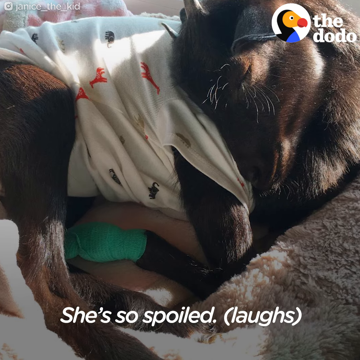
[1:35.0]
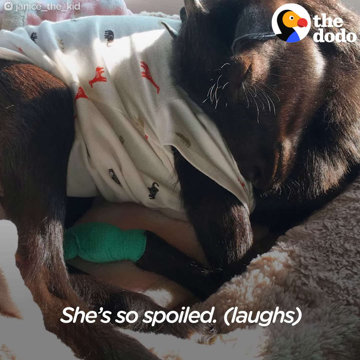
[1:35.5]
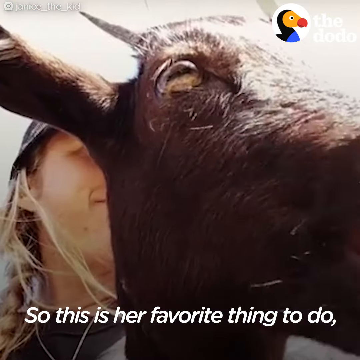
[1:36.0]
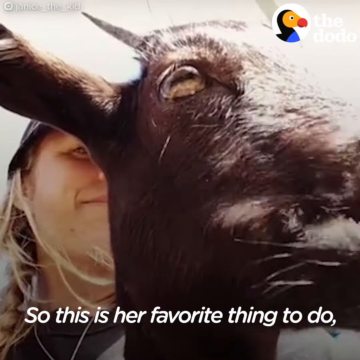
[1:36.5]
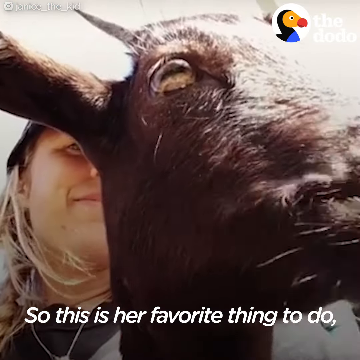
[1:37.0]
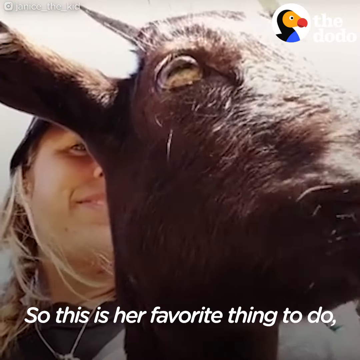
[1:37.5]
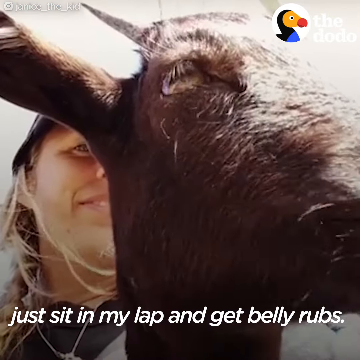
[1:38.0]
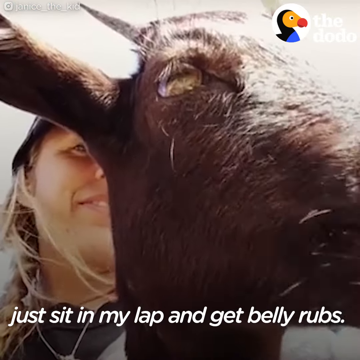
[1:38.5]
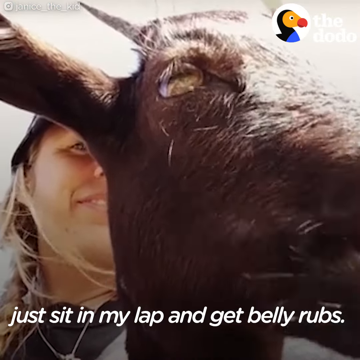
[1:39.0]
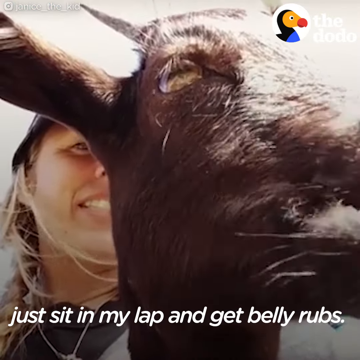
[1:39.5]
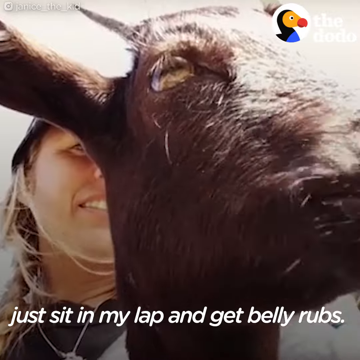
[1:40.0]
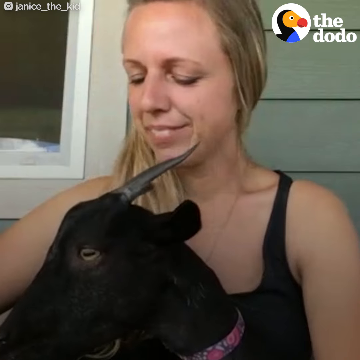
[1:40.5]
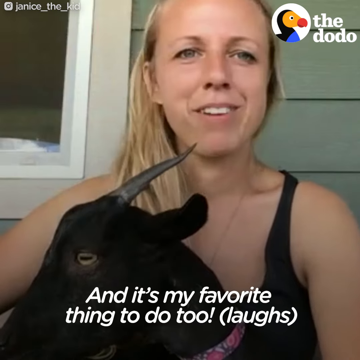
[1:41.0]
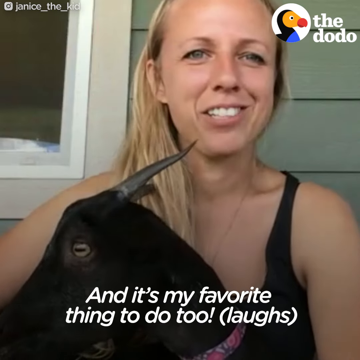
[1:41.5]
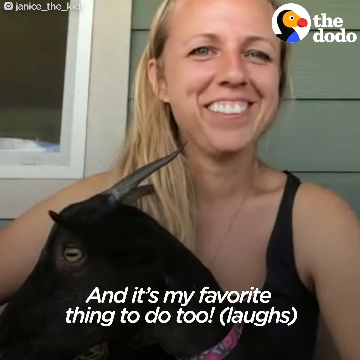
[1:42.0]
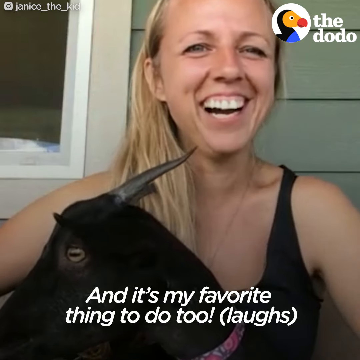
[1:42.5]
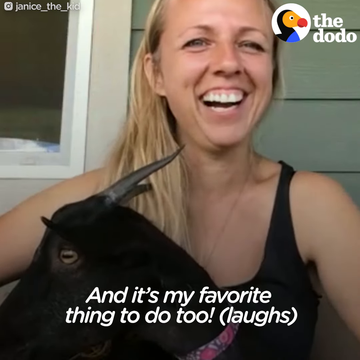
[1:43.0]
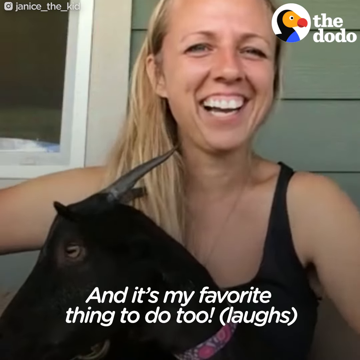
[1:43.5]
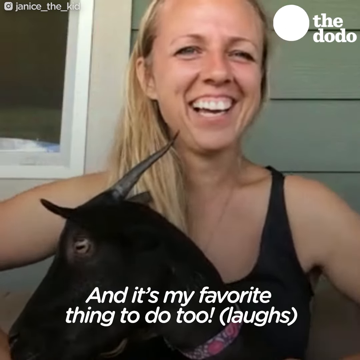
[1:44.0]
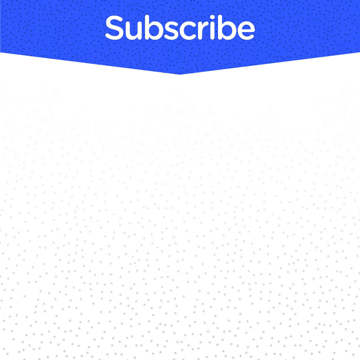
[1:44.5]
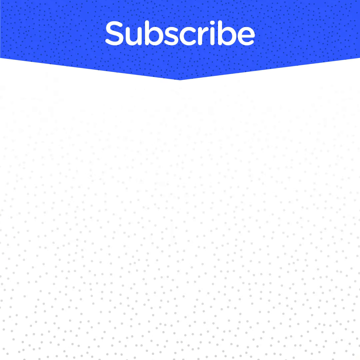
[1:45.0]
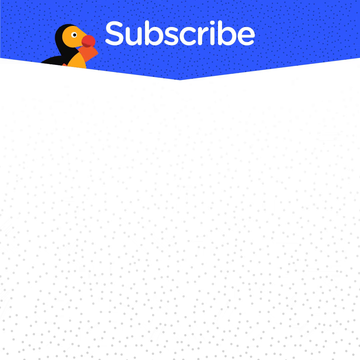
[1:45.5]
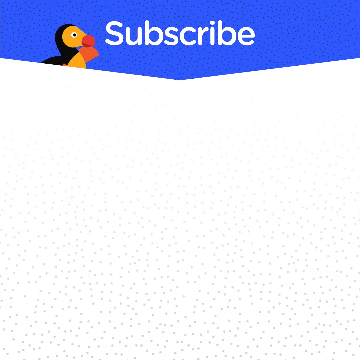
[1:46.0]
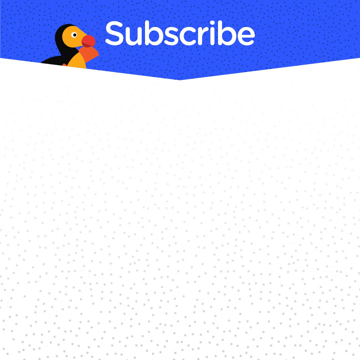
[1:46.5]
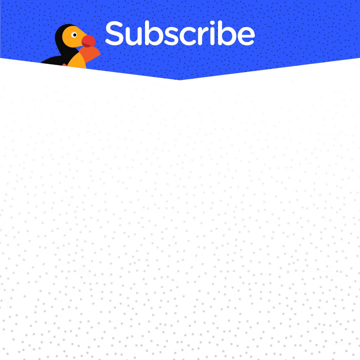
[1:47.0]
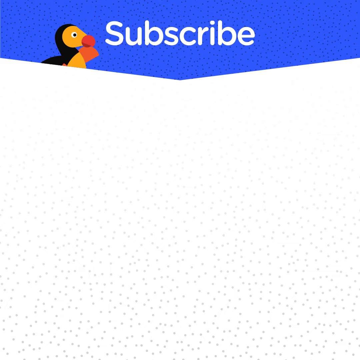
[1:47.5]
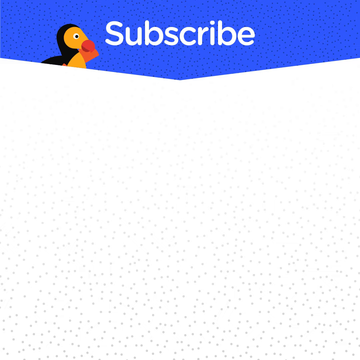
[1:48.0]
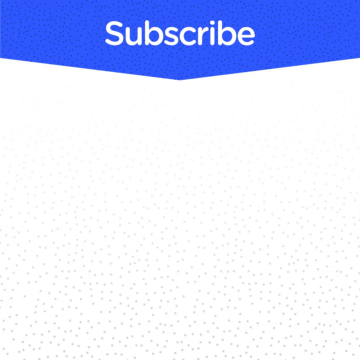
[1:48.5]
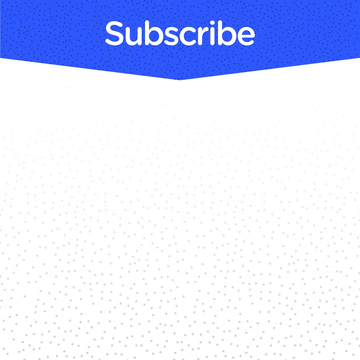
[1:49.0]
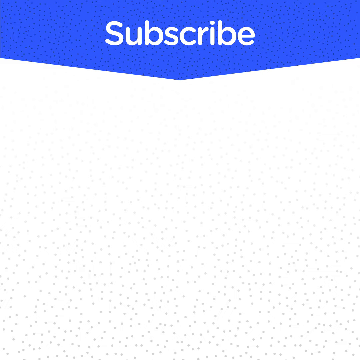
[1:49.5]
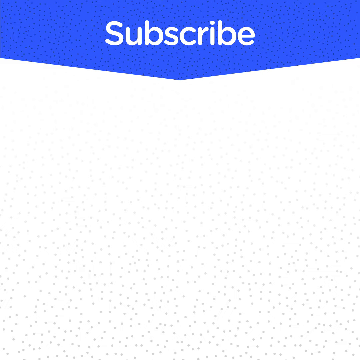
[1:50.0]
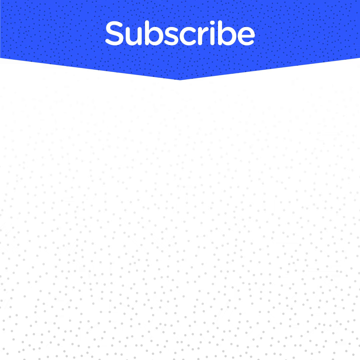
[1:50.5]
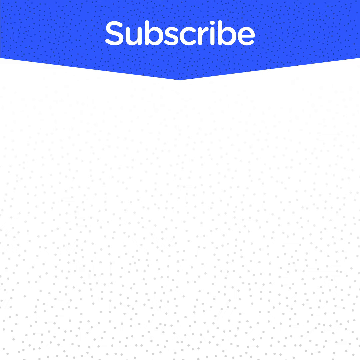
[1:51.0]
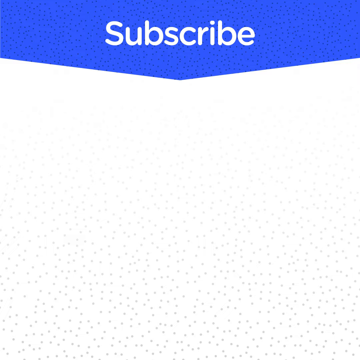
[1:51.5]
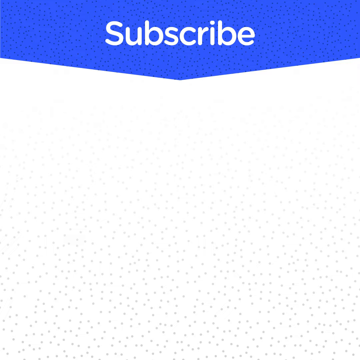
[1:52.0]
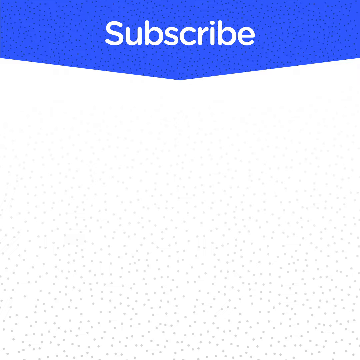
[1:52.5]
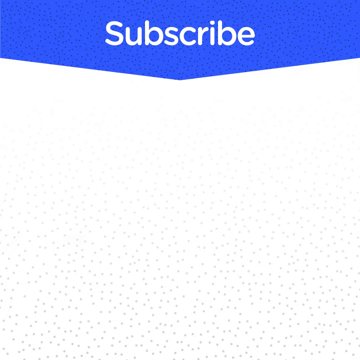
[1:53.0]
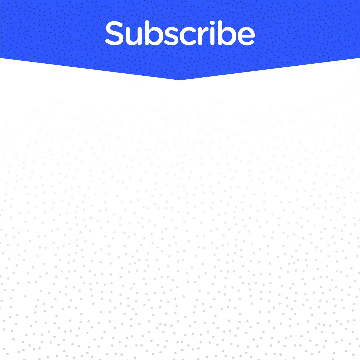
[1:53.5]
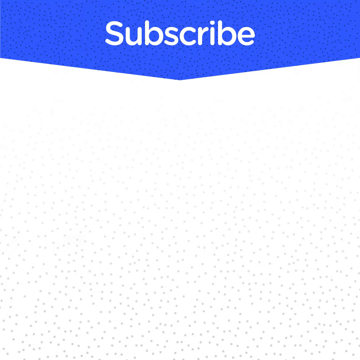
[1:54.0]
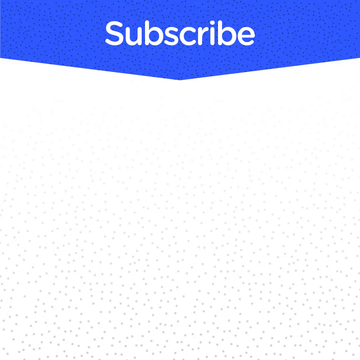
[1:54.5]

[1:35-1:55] The little goat runs on the green grass. The lady sits with the big goat on what looks like a white front porch; the big black goat with long horns sits on her lap, his mouth moving as he eats something. One of his eyes is visible, an auburn-colored eye. The little goat is shown sleeping, curled up on his side, wearing a little baby-like onesie with what looks like a giraffe-type print on top, while the lady sits outside on the porch. Behind her, the outside wall is painted green.